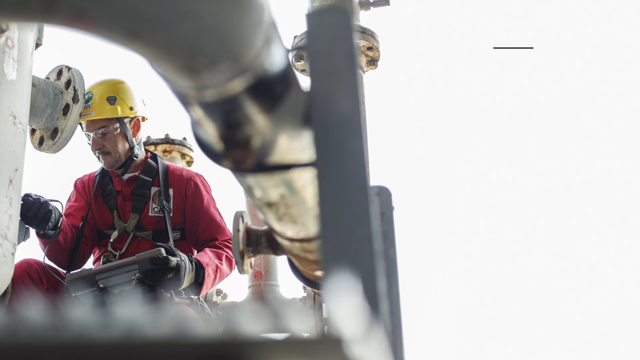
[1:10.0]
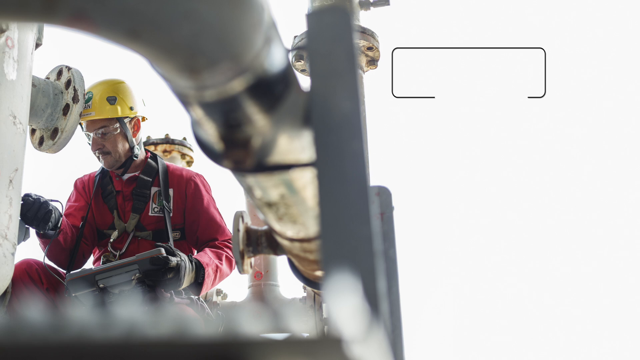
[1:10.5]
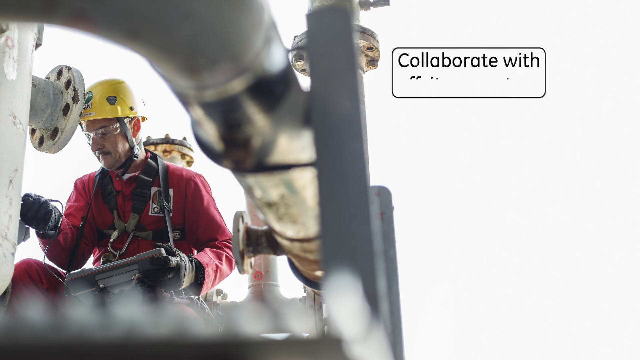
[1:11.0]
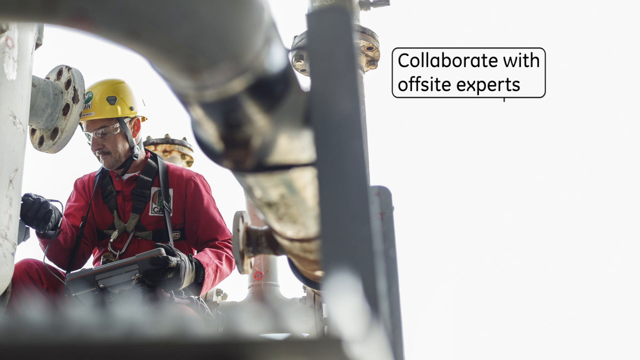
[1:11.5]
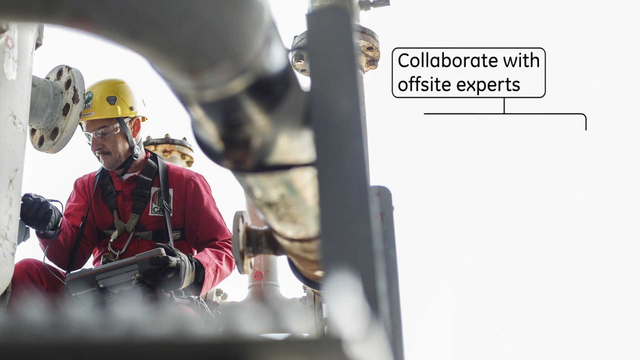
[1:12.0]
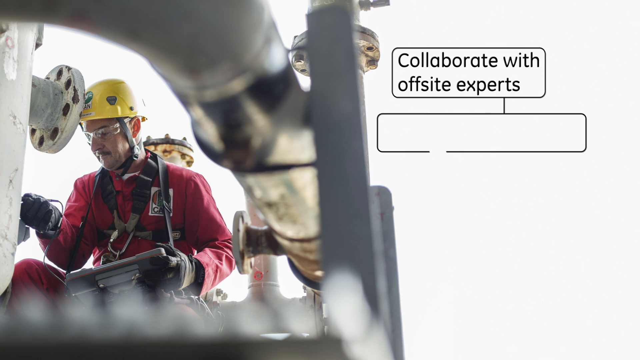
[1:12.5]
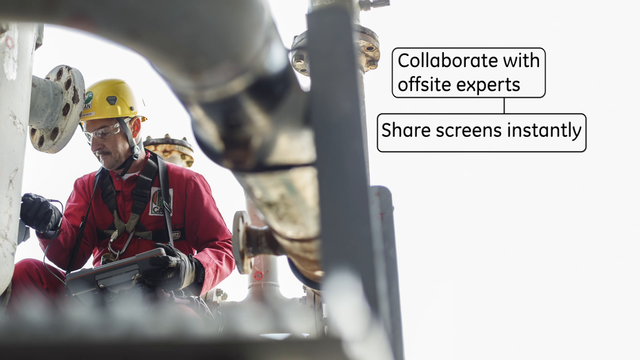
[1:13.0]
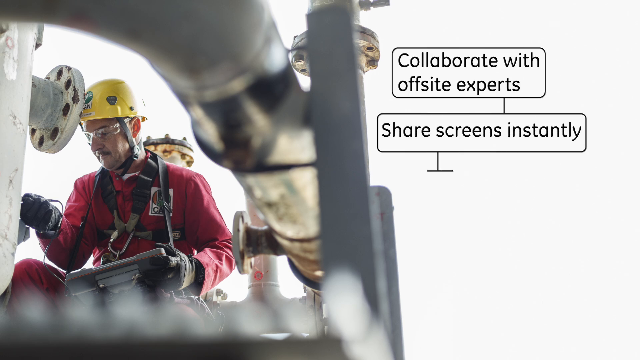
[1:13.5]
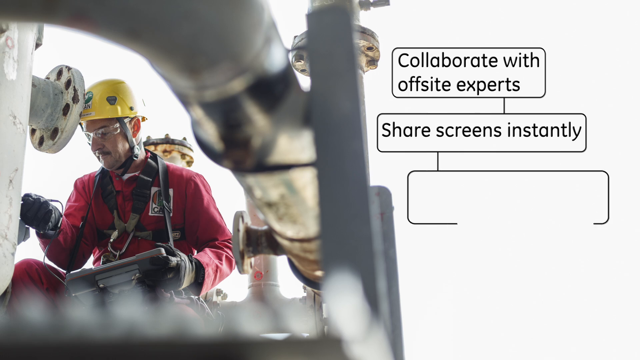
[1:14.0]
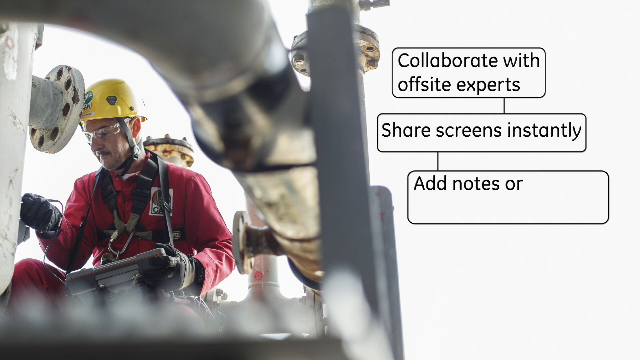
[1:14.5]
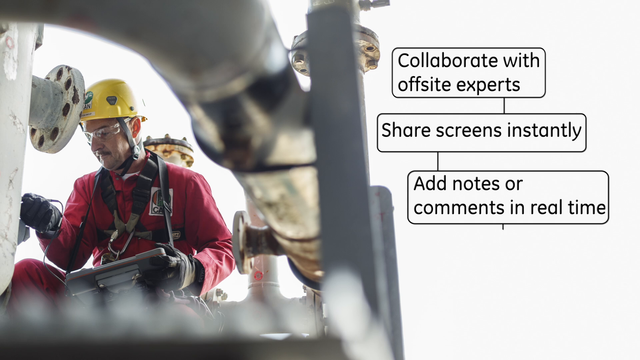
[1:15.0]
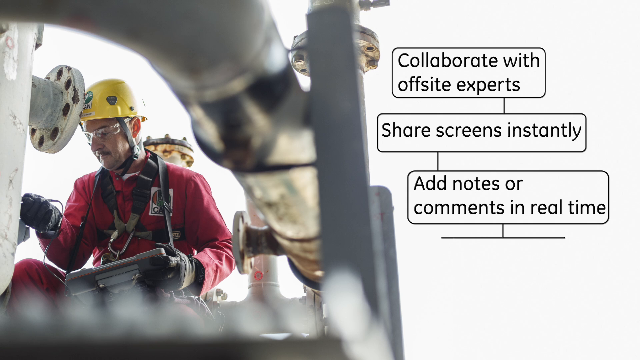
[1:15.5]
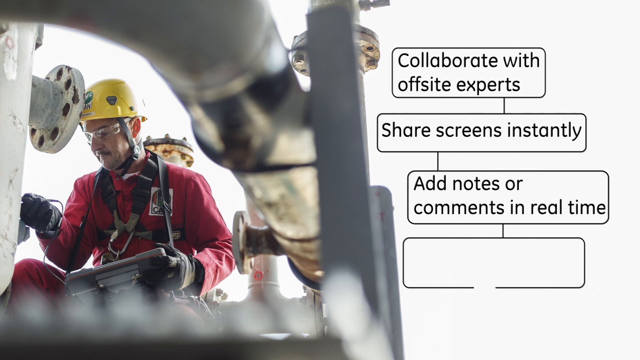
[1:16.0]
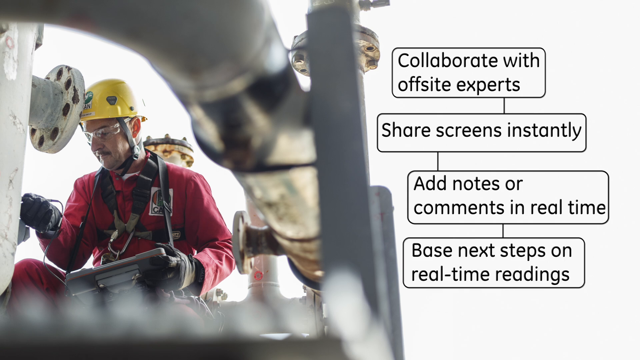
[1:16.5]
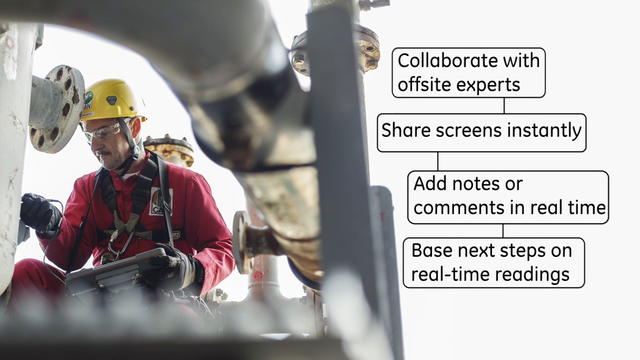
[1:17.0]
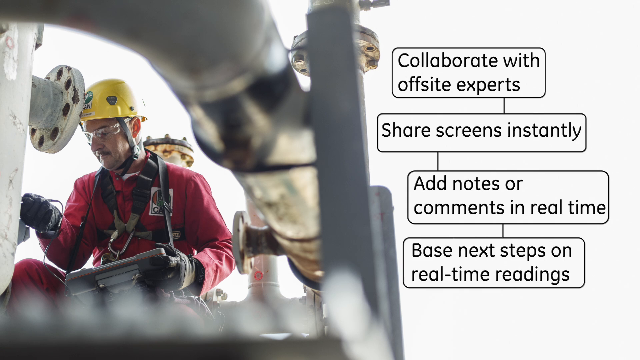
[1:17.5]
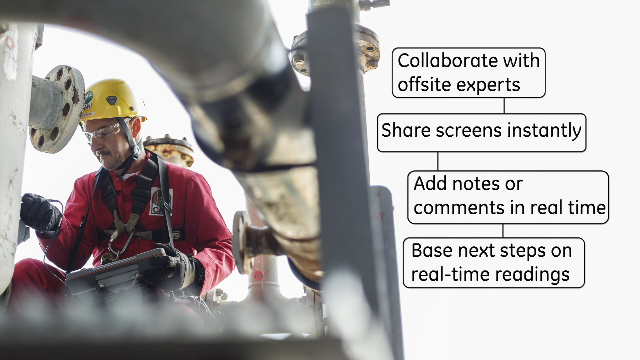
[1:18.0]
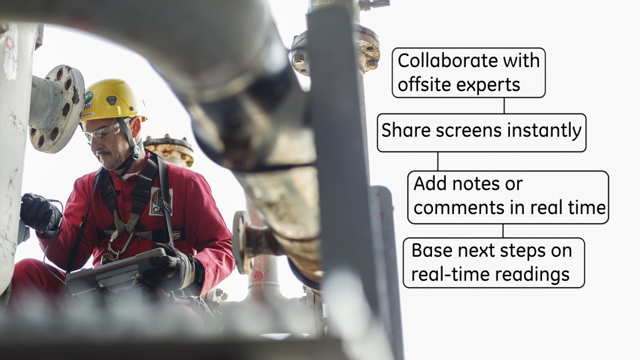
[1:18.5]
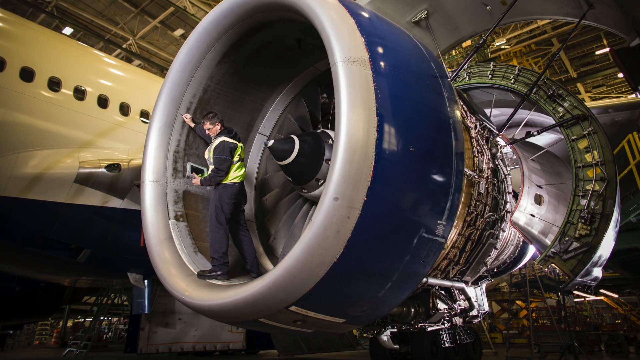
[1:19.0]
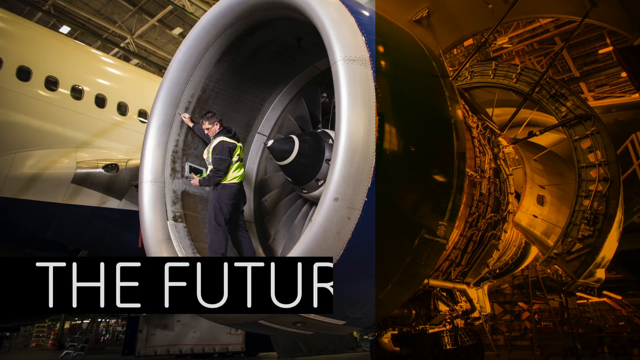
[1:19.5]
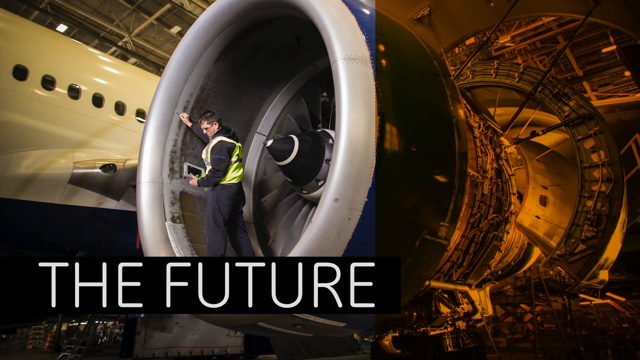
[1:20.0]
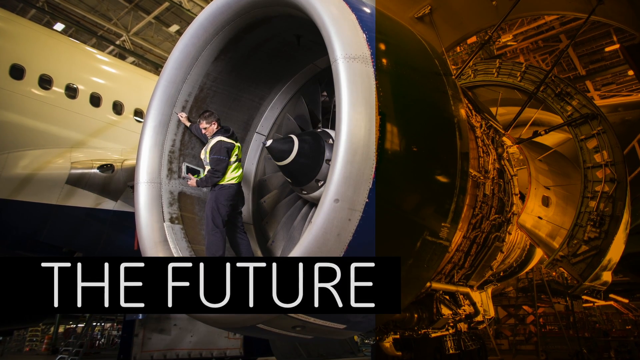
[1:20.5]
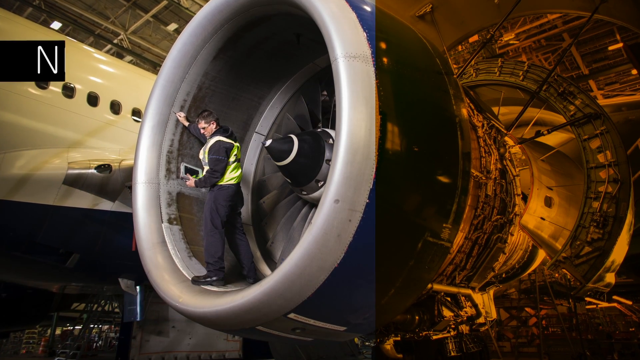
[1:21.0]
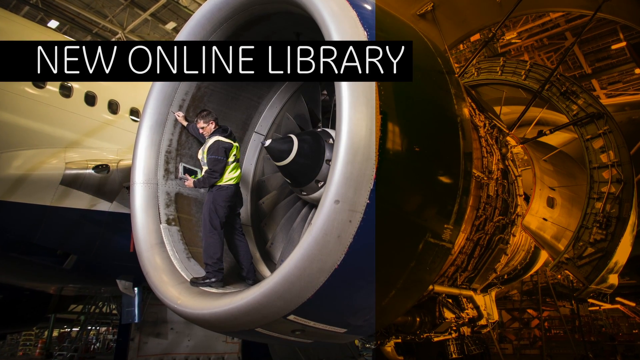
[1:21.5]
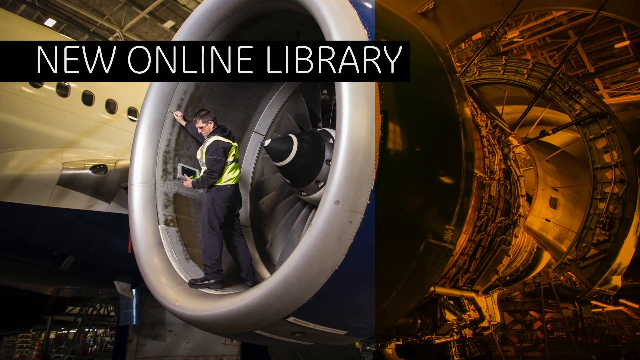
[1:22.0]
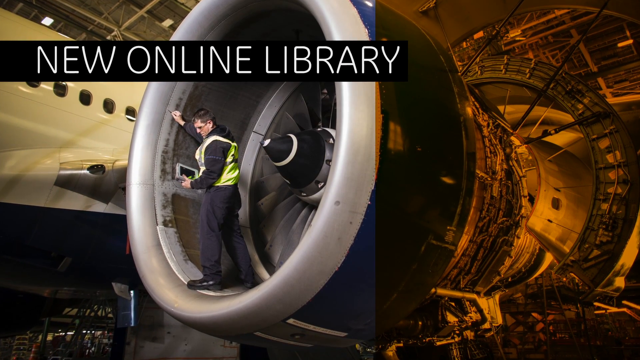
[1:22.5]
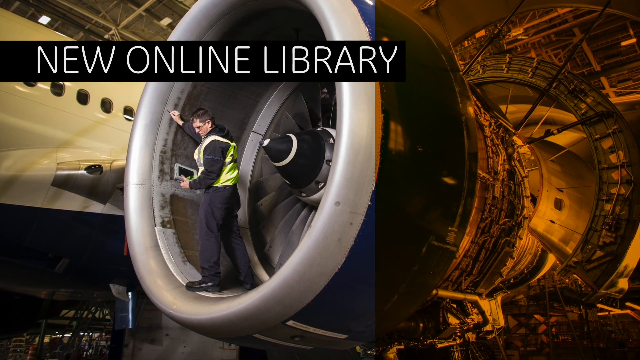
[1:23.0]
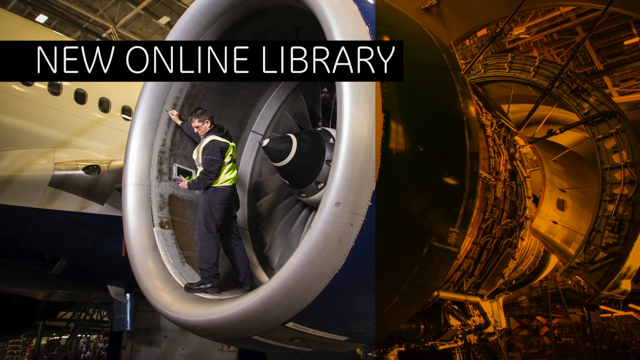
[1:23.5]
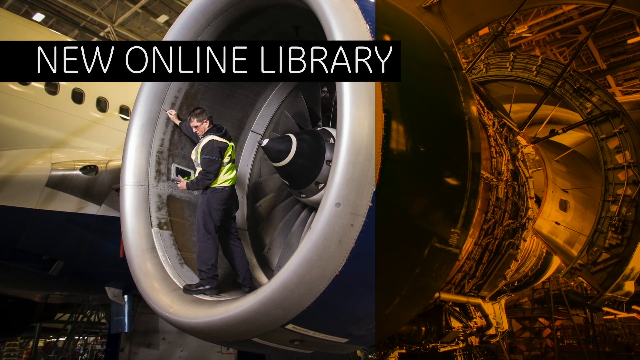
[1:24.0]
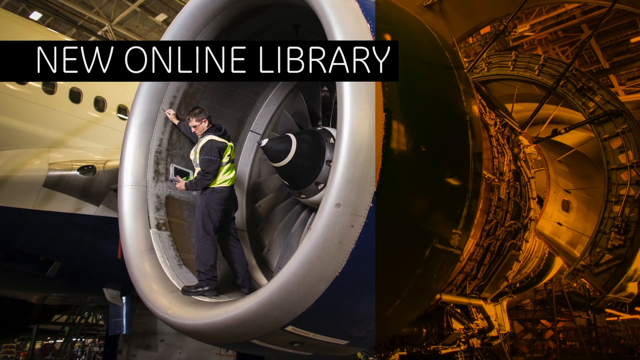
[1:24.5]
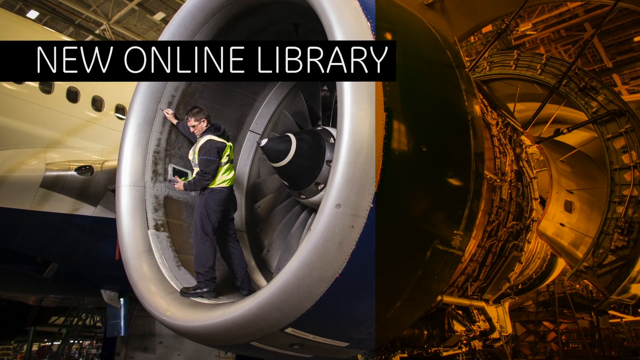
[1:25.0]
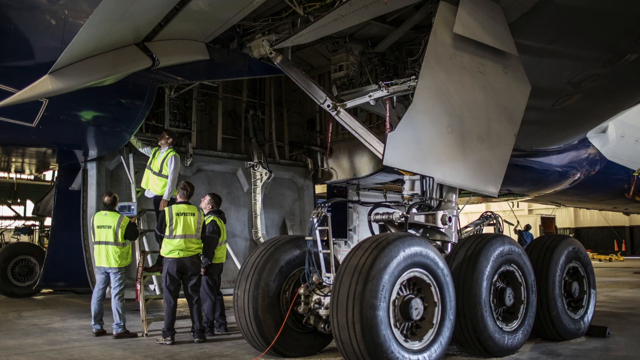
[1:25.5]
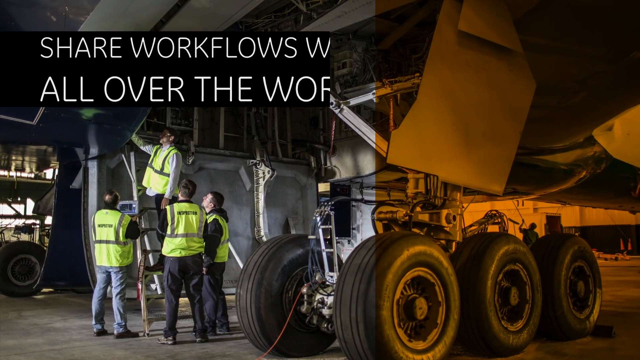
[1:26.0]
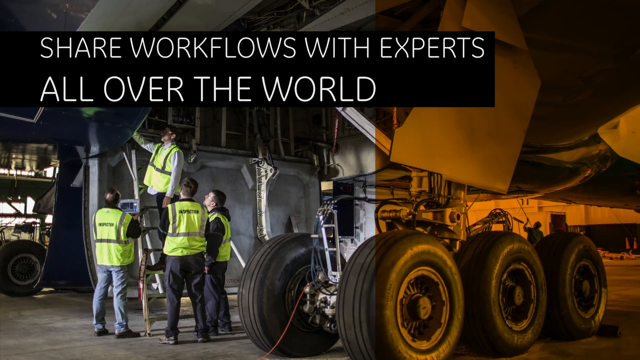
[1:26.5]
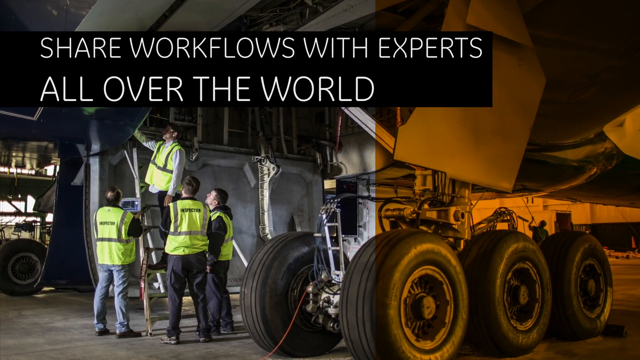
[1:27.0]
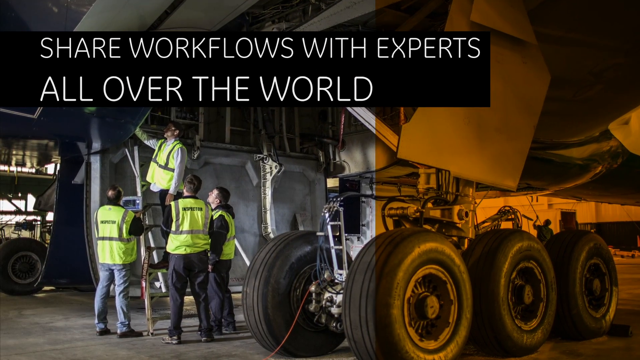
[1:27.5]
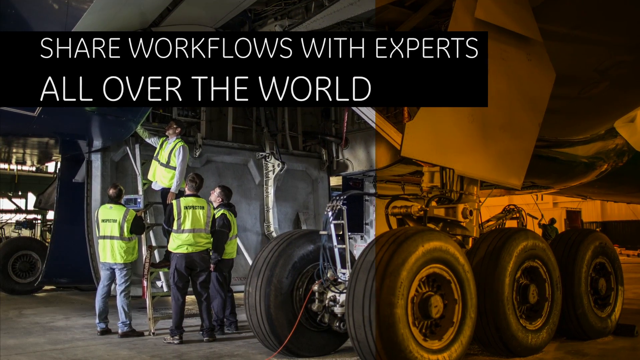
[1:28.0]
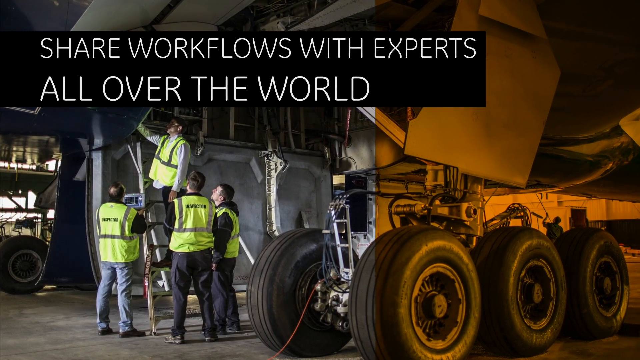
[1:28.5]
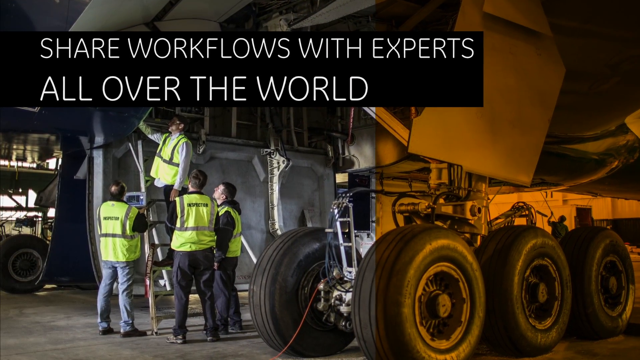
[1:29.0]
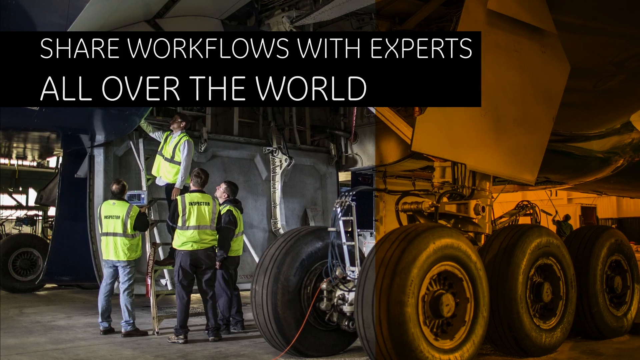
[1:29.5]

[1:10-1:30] A worker attached to a harness, wearing a red jumpsuit, a yellow hard hat, safety goggles and work gloves, is up in the air checking welds with the weld inspection device. He looks calm and secure as he inspects the weld. The device's features are listed: collaborate with off-site experts, share screens instantly, add notes or comments in real time, and base next steps on real-time readings. The scene moves to "the future," showing a man inspecting what appears to be the weld of an airplane turbine engine as he stands inside the engine, which is off. He wears a yellow safety vest and safety glasses and looks at the weld inspection device. A "new online library" is also shown. Next comes sharing workflows with experts all over the world: a group of four people, with one trainer, one inspector inspecting, and three people observing the inspector.